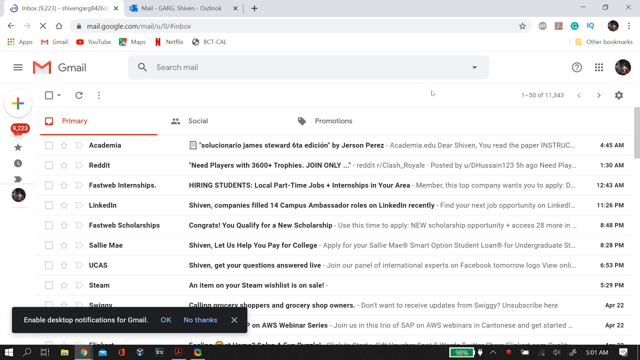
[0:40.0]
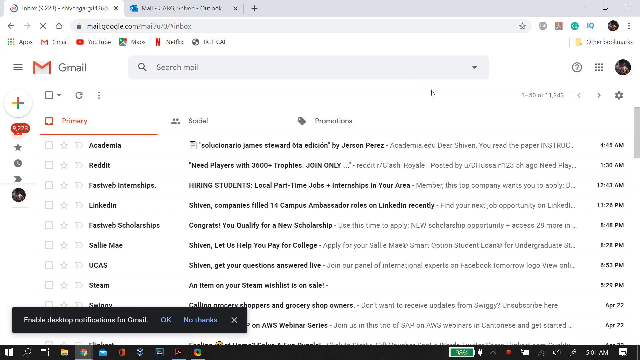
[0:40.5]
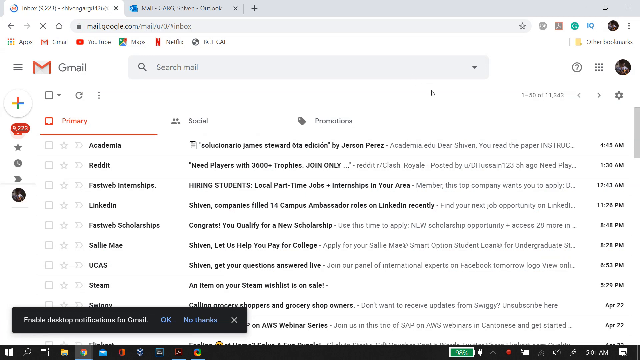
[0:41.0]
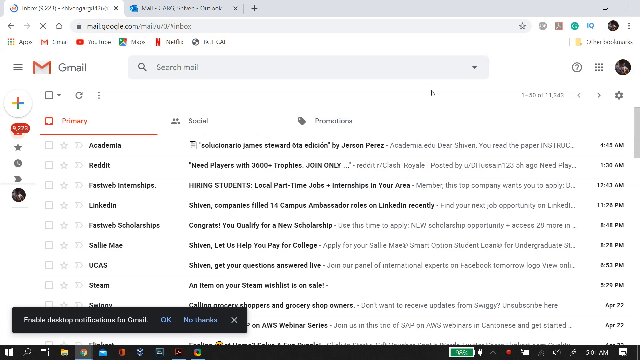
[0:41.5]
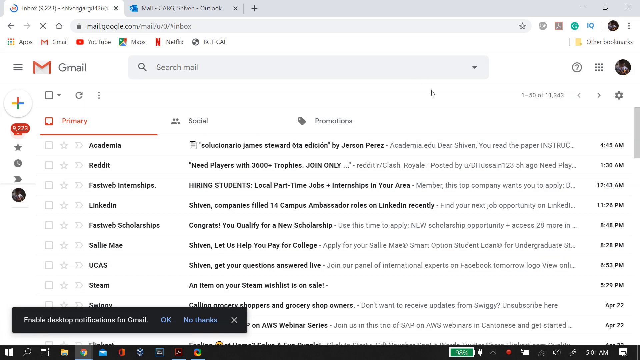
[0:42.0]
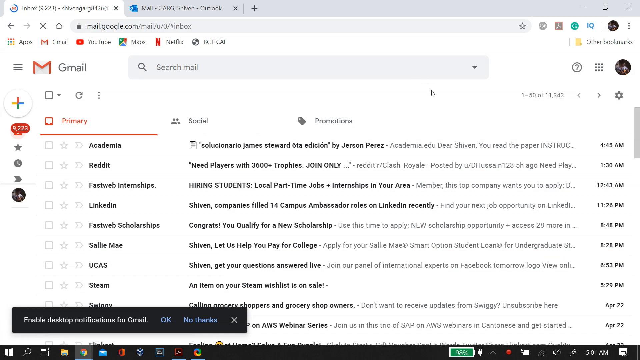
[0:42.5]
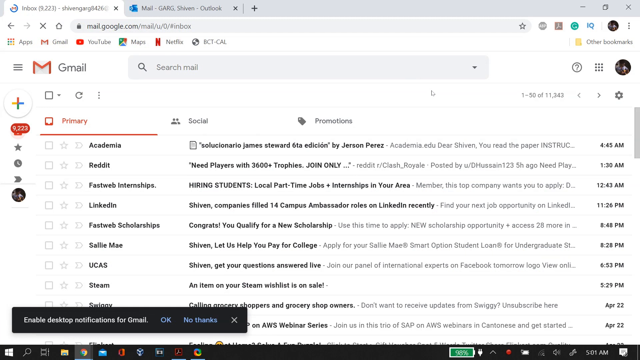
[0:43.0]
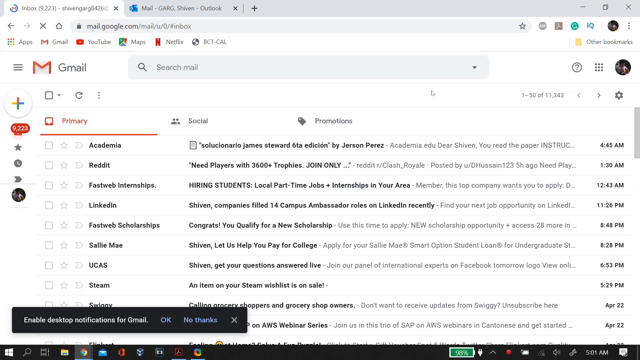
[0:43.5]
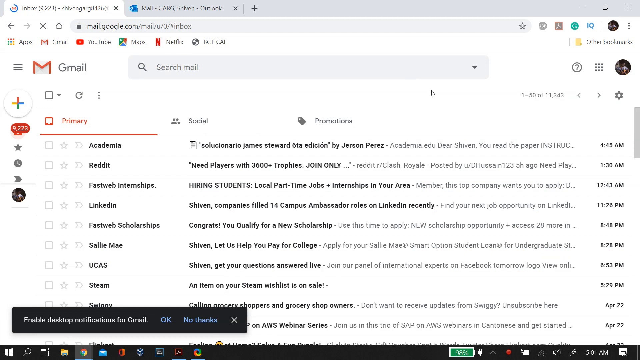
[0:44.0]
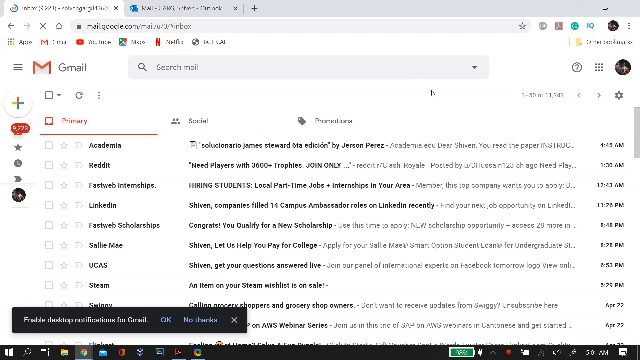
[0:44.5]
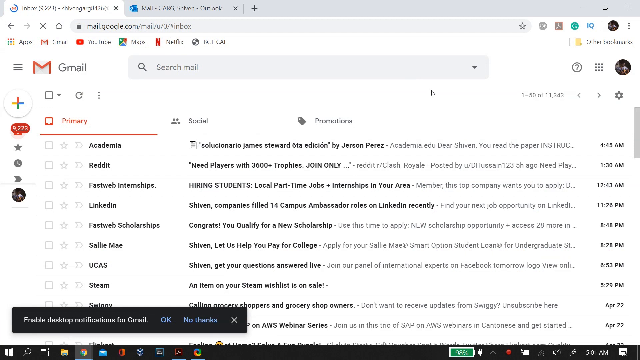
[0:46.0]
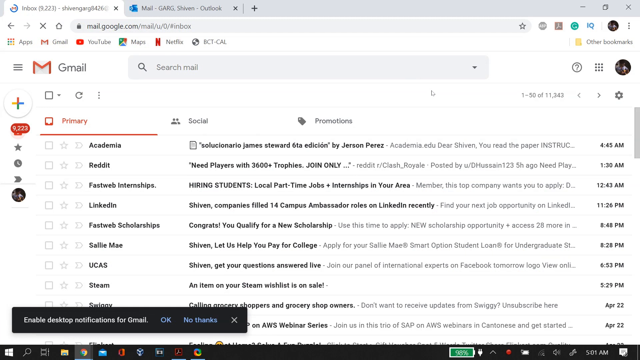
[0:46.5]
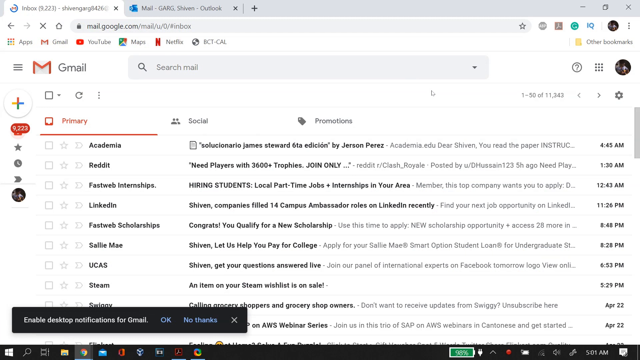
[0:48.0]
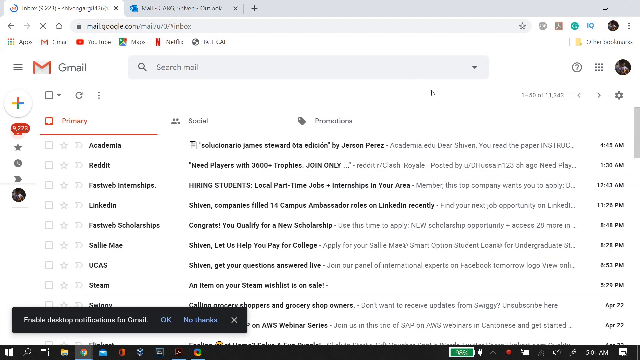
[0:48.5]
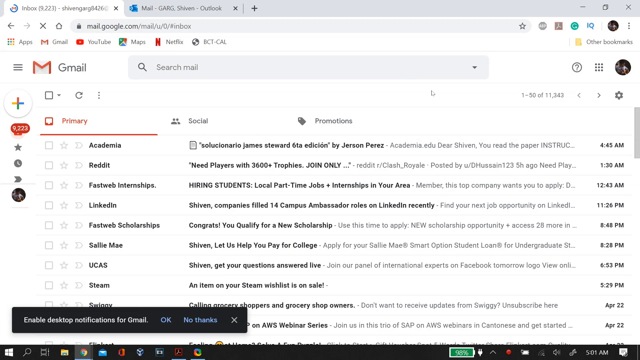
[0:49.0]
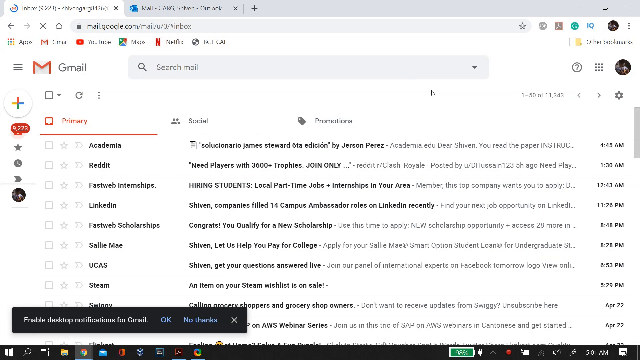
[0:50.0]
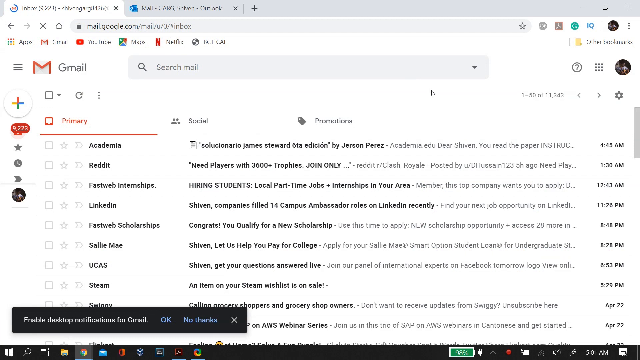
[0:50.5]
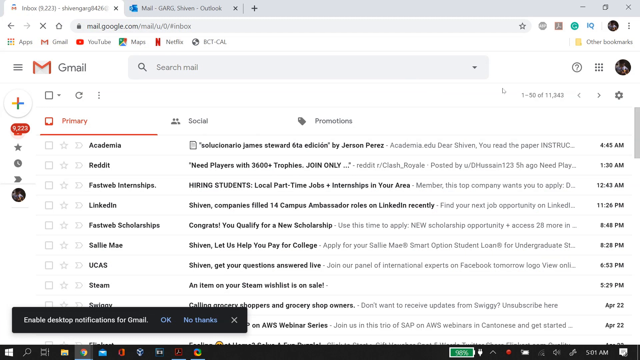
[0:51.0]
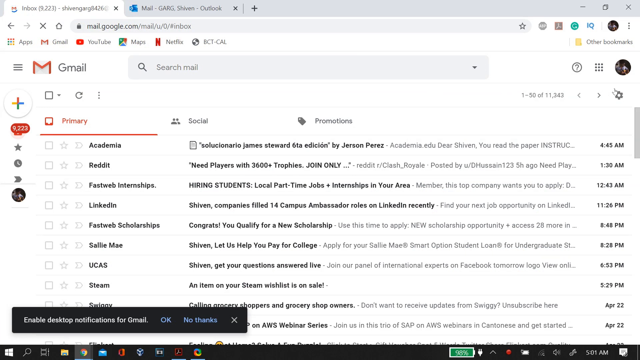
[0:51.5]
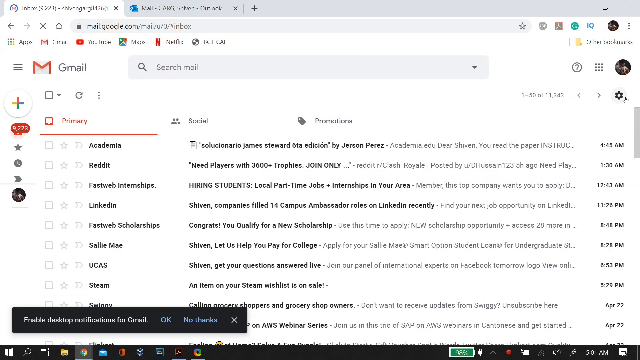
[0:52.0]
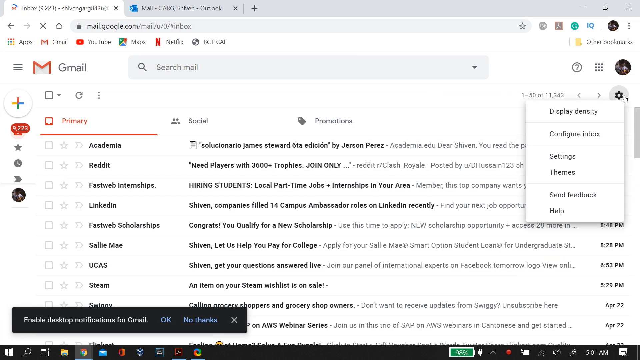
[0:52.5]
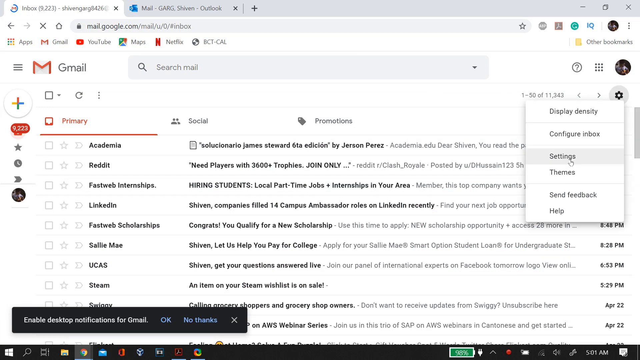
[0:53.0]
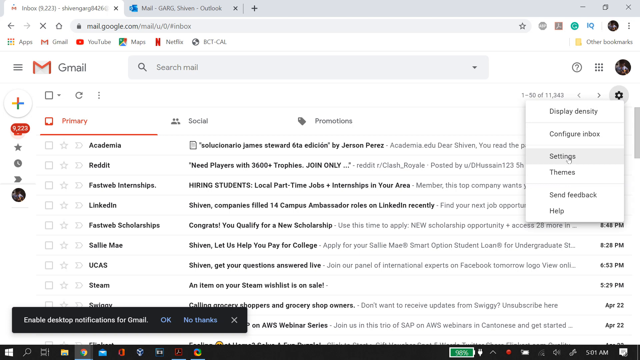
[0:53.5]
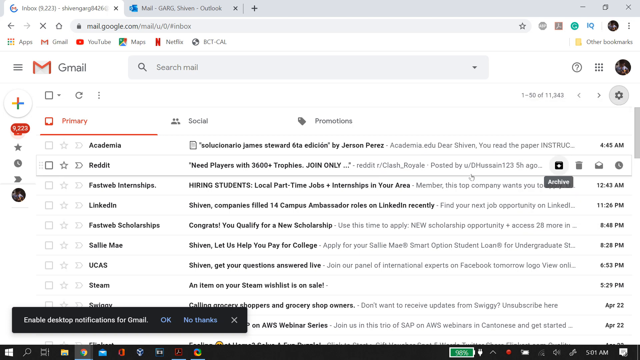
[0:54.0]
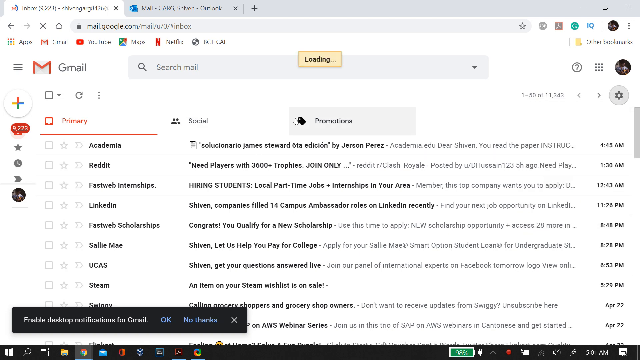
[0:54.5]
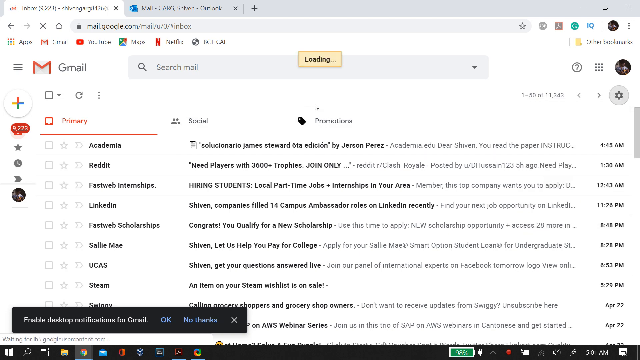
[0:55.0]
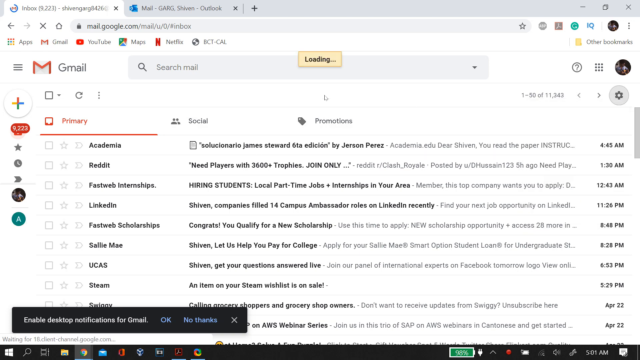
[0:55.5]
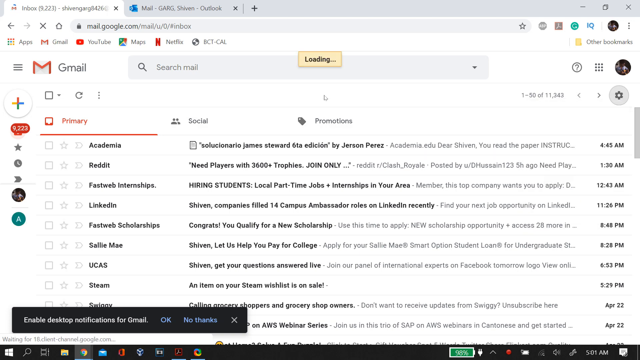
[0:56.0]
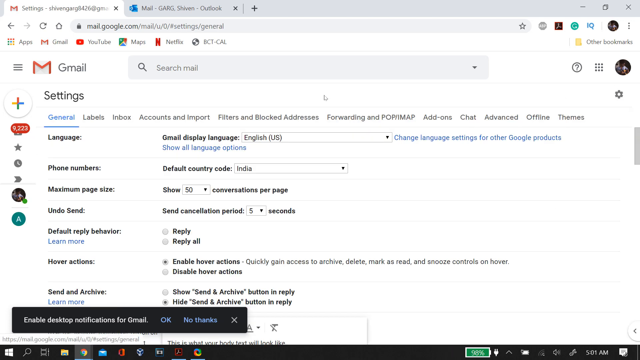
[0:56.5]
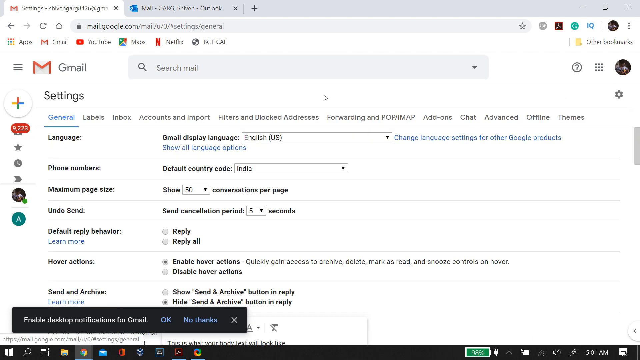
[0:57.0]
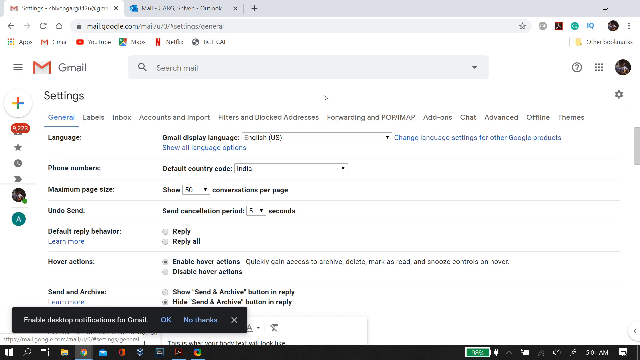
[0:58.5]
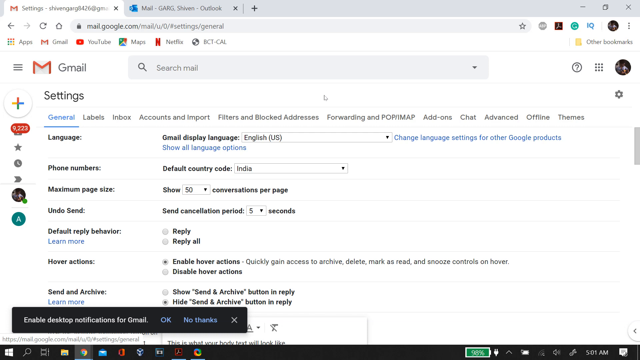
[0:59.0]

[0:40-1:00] The same Google Chrome tab with the person's Gmail remains open, showing the unread emails and the profile picture. The user moves the mouse to the Gmail configuration button, which opens a small menu with options that say "Display Density", "Configure Inbox", "Configuration", "Topics", "Send Feedback" and "Ask for Help". The user chooses the configuration option, Settings, which opens a new section in Gmail with editable options: the language the page is shown in, the country code, set to India, the number of conversations to show per page, set to 50, a 5-second period to cancel a shipment, the default way to respond to an email (reply to only that email or reply to everyone who received it), and an option for what happens when the mouse passes over an email, among other general options.